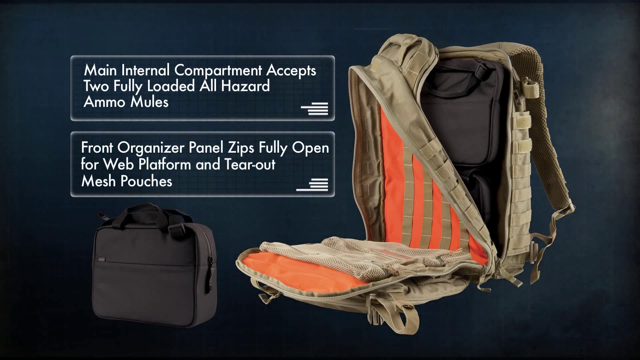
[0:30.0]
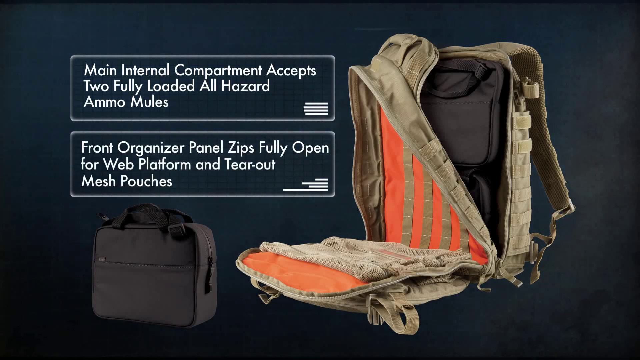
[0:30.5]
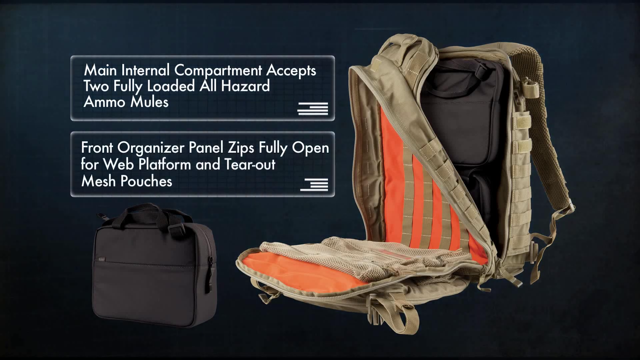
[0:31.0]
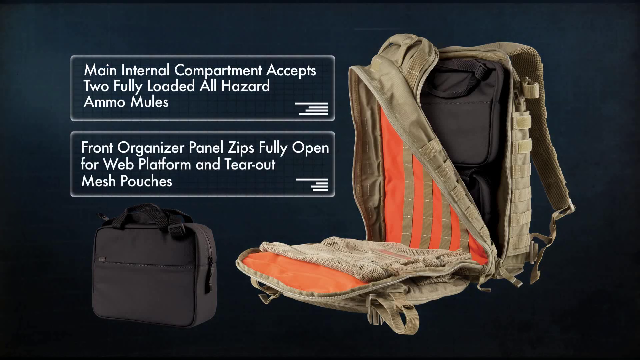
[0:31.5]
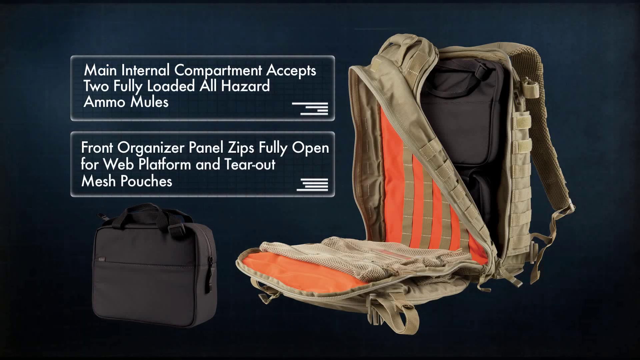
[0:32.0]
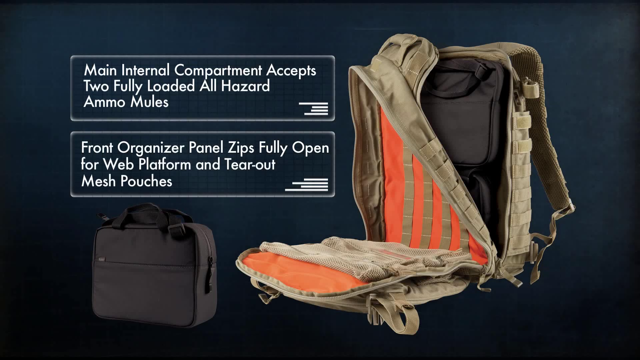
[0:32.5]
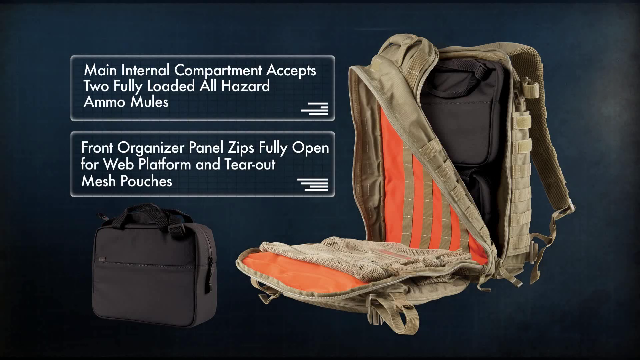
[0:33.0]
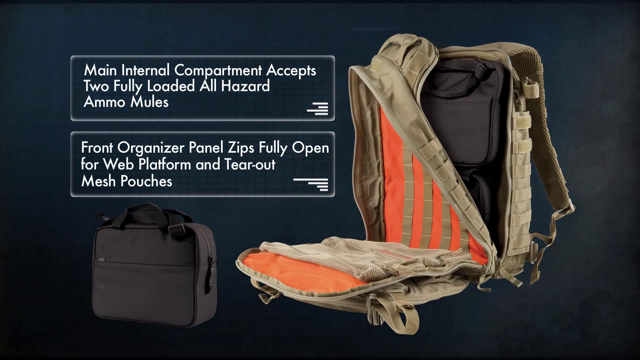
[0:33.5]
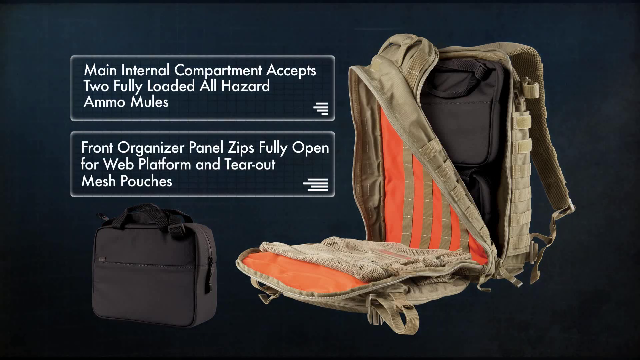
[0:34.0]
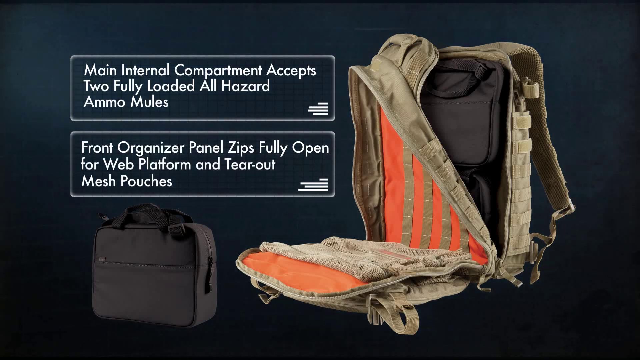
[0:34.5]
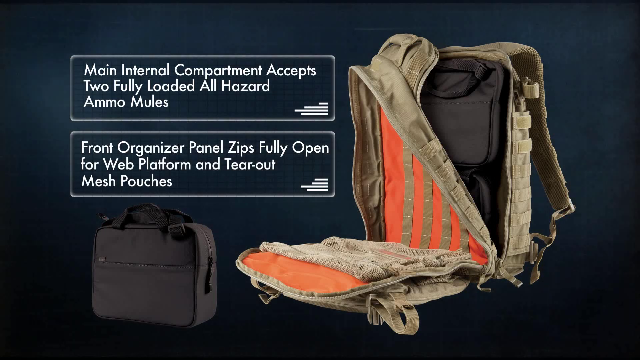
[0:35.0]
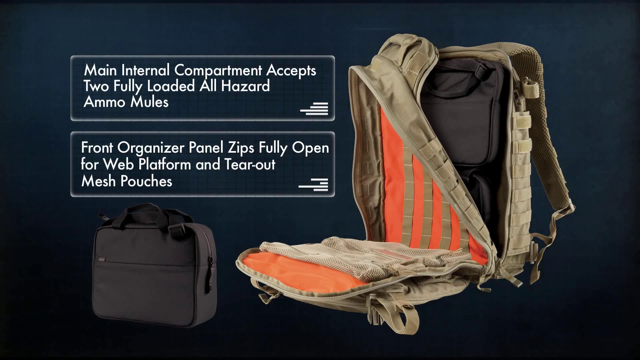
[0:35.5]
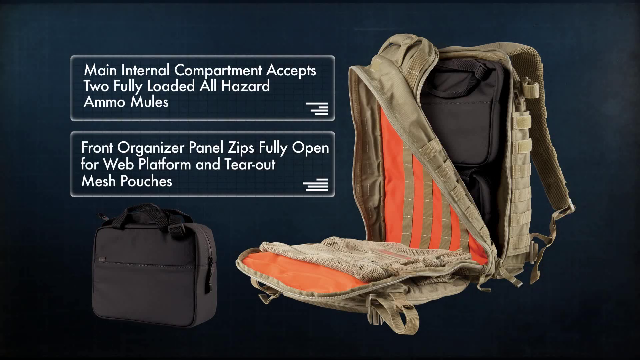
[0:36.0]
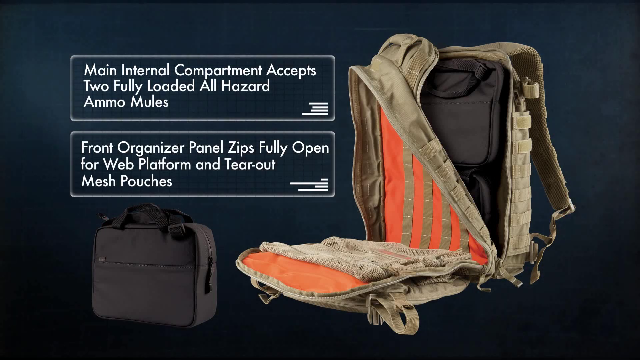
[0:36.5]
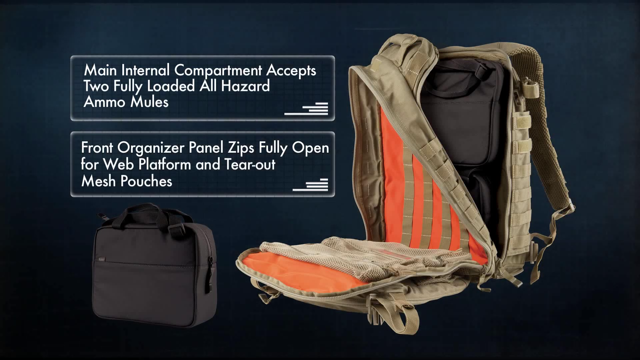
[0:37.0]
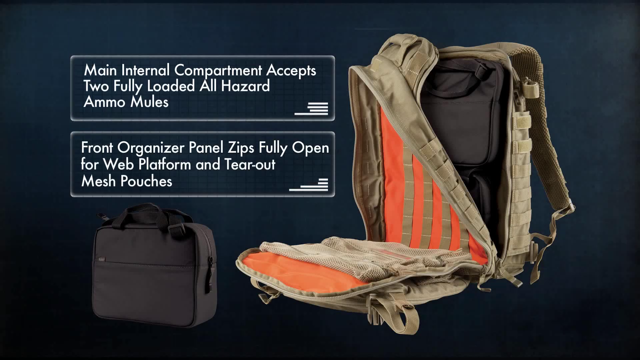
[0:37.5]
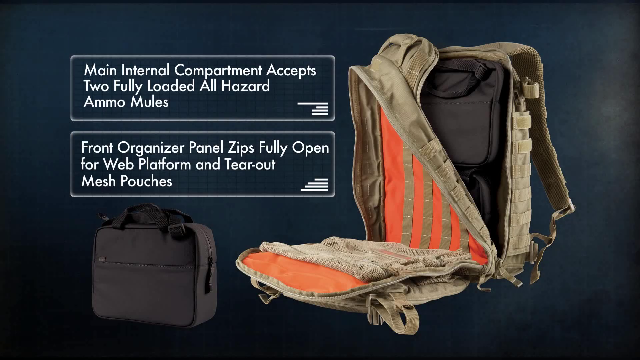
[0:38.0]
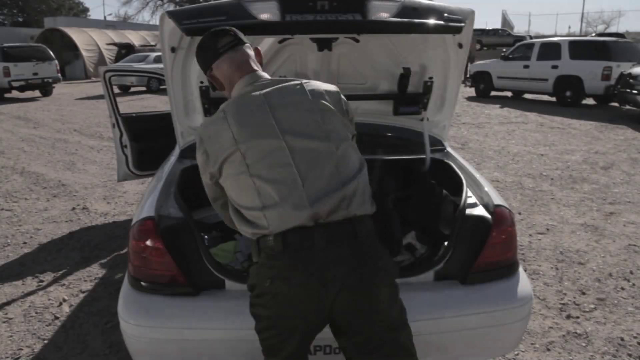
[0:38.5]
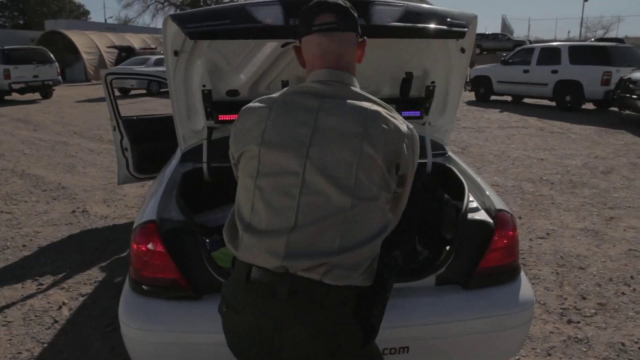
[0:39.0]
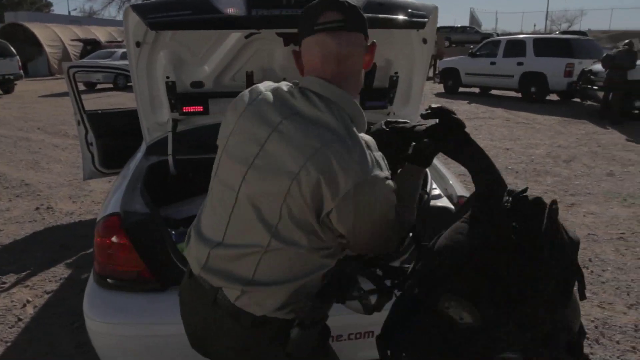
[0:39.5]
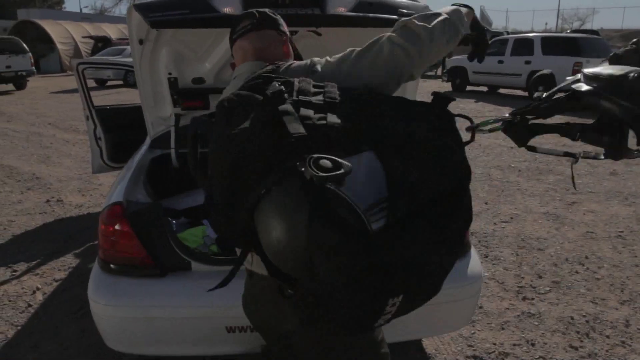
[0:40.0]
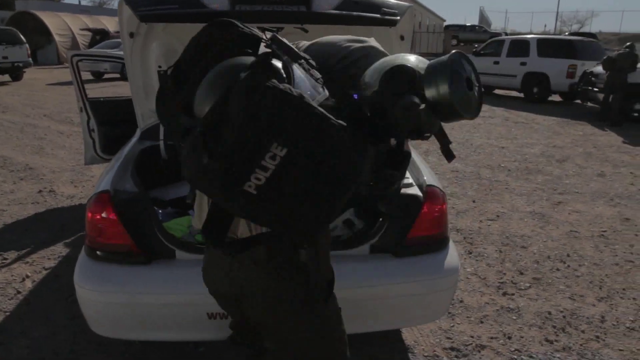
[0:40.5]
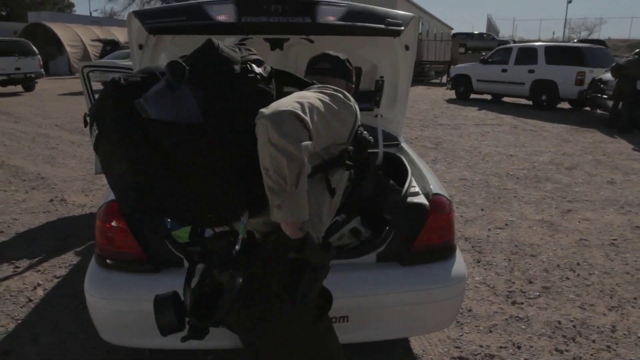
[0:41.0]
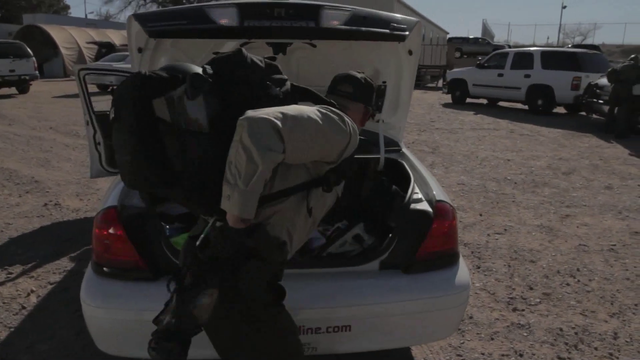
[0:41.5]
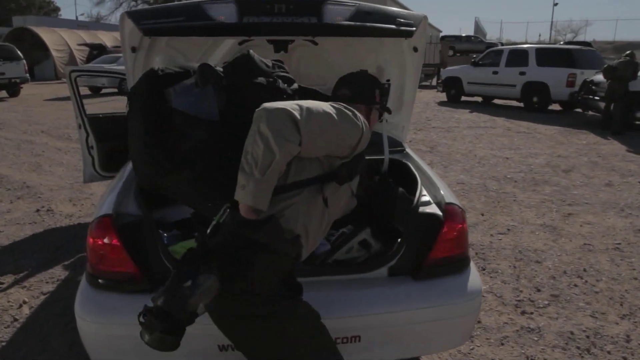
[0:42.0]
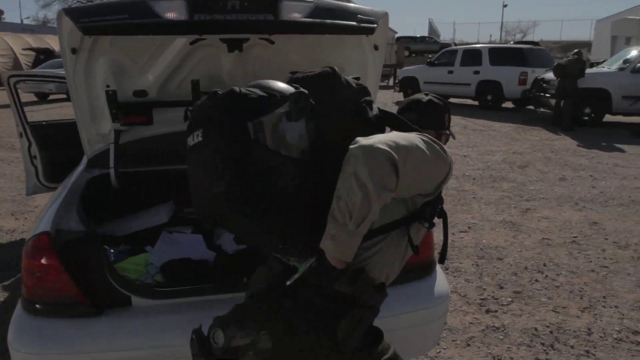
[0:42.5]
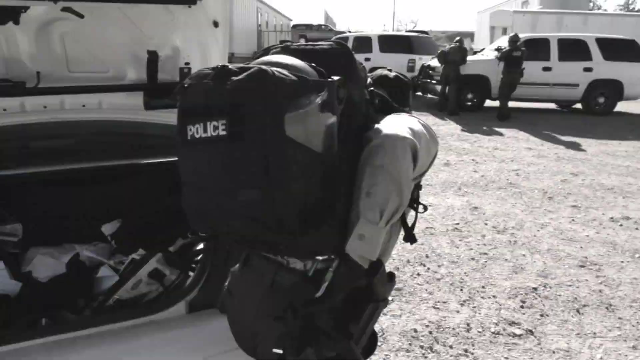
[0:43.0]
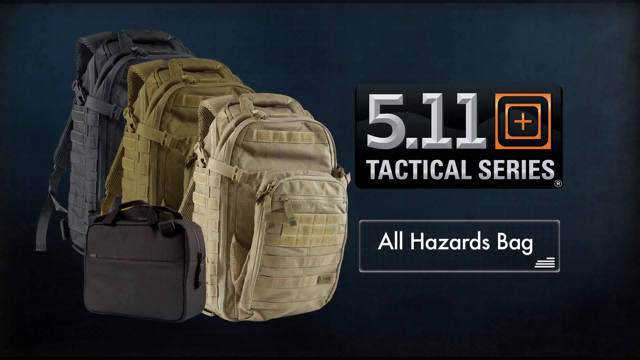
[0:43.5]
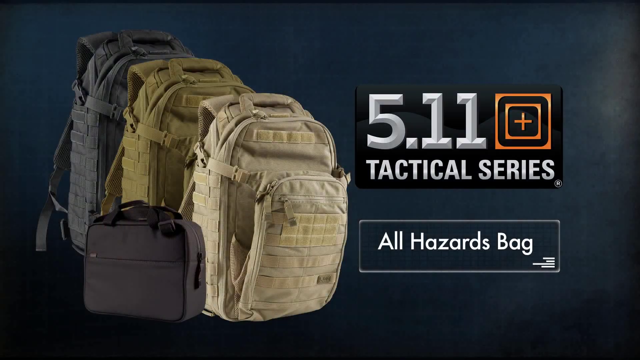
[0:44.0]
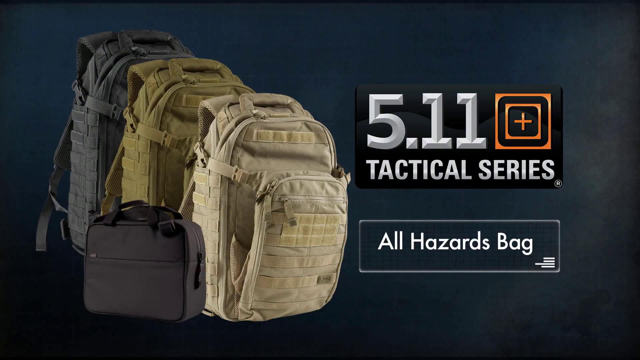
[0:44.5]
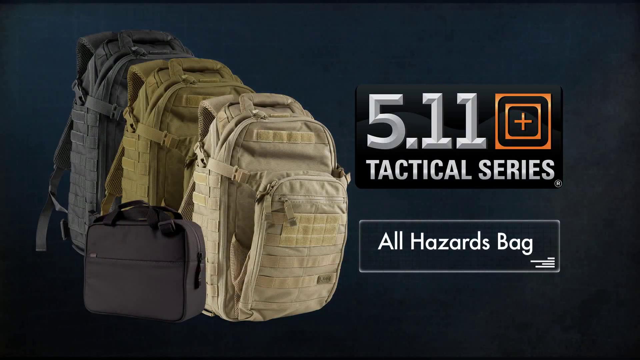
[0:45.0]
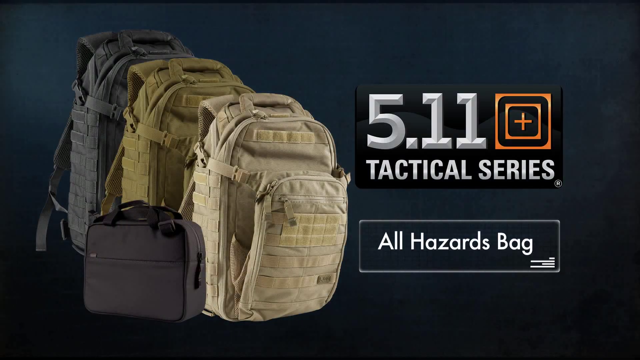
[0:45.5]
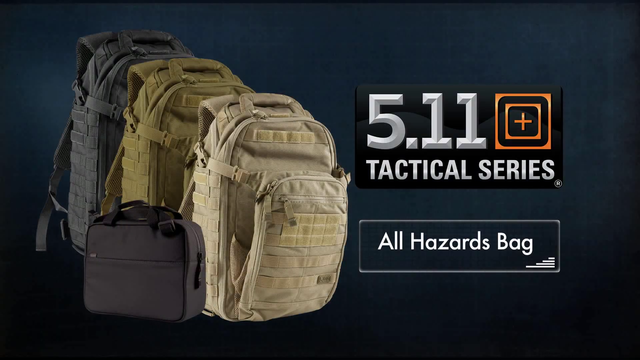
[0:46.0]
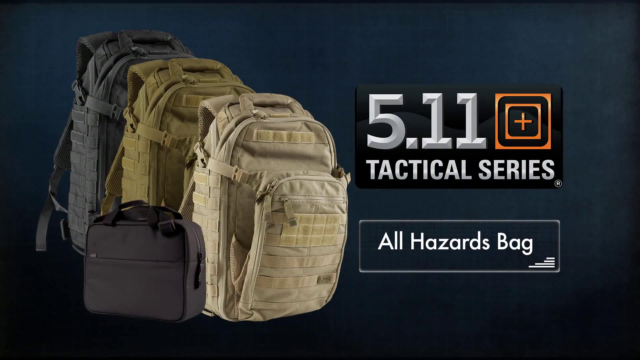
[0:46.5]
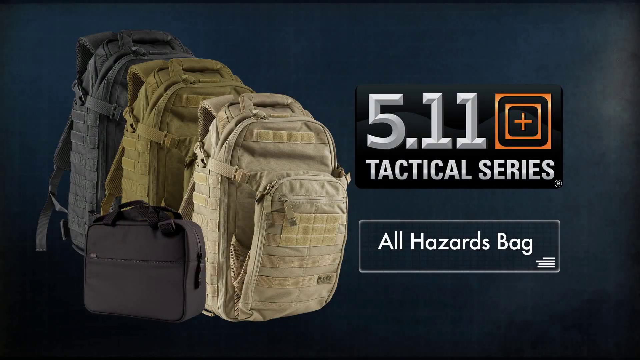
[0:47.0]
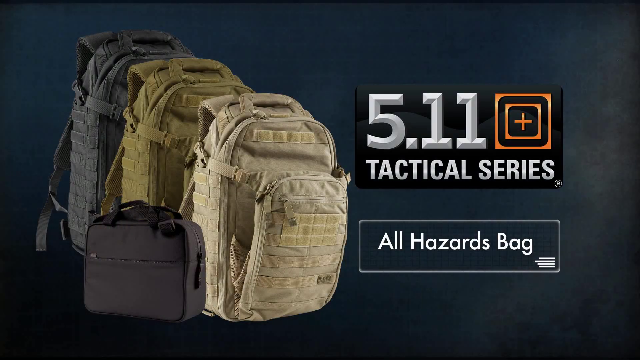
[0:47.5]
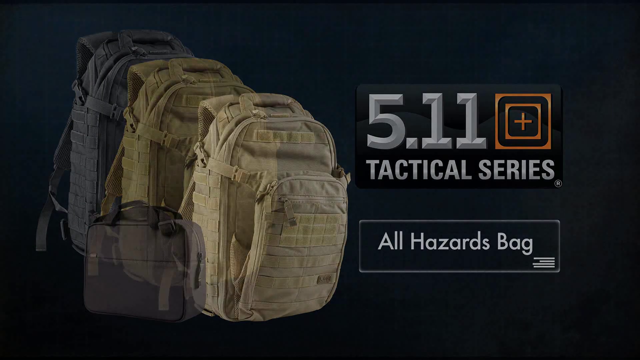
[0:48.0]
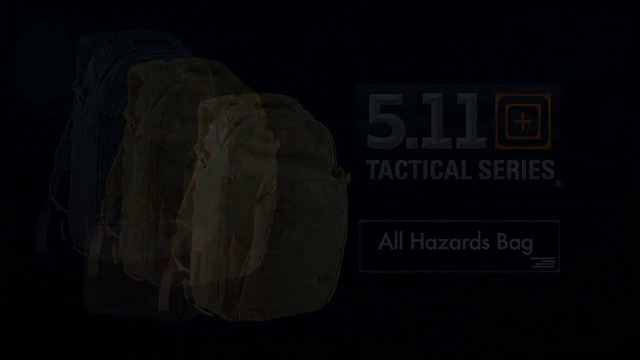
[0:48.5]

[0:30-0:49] The inside of a backpack is shown. The backpack is tan on the outside and orange on the inside, with tan stripes going up and down the inside. Another compartment behind it in the backpack has a black case inside. The image of the open backpack is on the right side of the video, and a more up-close shot of the black case is on the bottom left. Above the black case are two points about the backpack: "main internal compartment accepts two fully loaded all-hazard ammo mules" and, below that, "front organizer panel sits fully open for web platform and tear-out mesh pouches". The scene then transitions back to the police officer, who takes some more things out of the trunk of the police car and straps on a very fully loaded black backpack with the word "police" on the back.